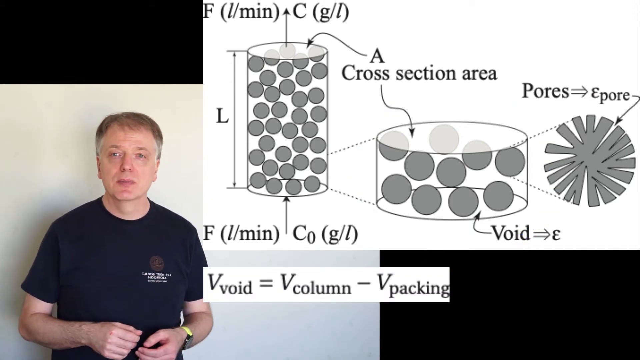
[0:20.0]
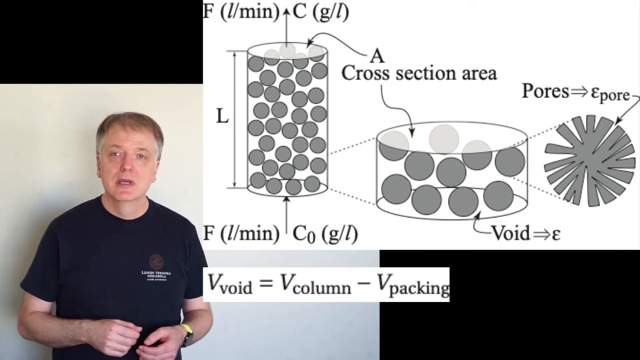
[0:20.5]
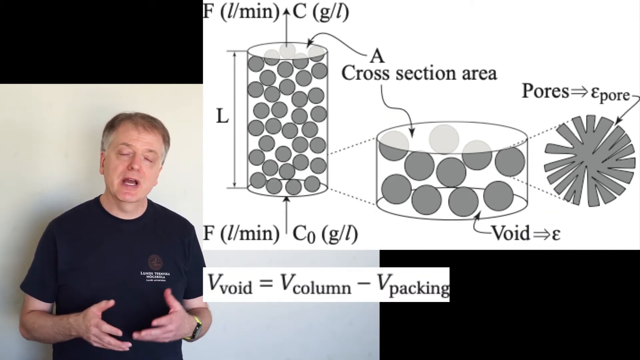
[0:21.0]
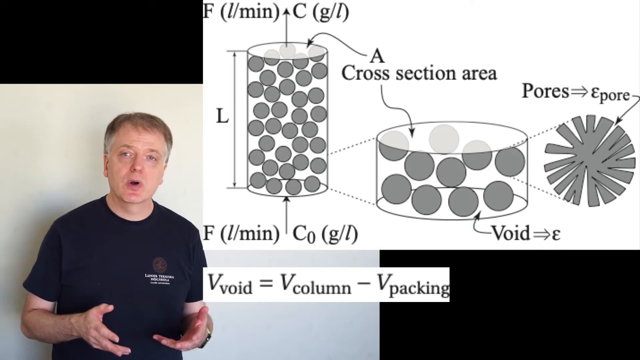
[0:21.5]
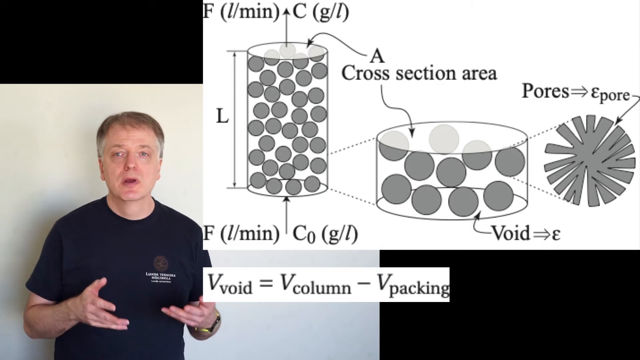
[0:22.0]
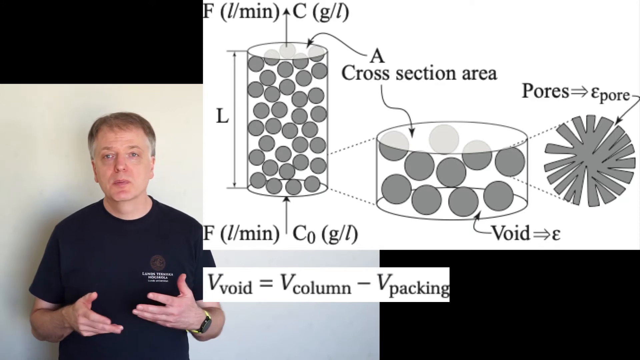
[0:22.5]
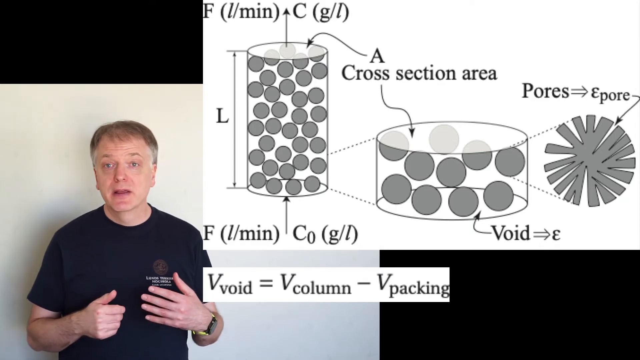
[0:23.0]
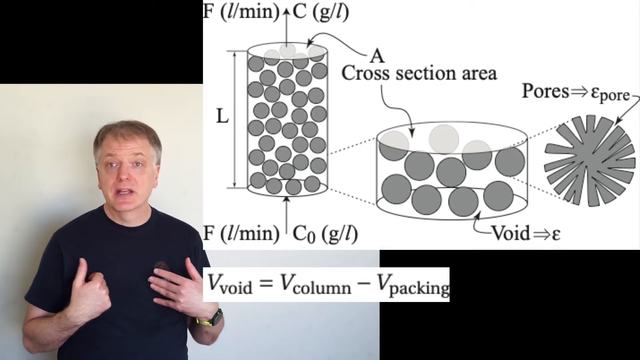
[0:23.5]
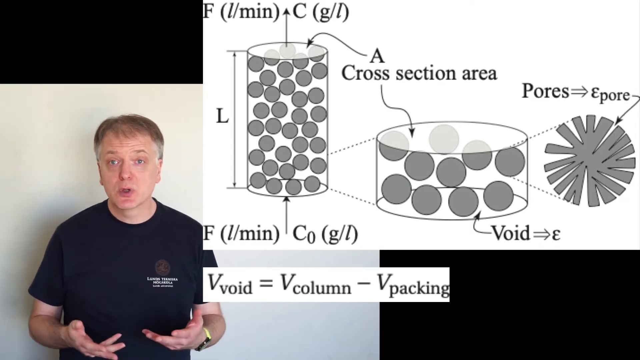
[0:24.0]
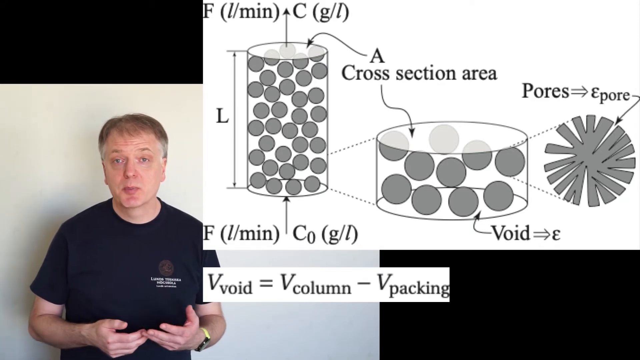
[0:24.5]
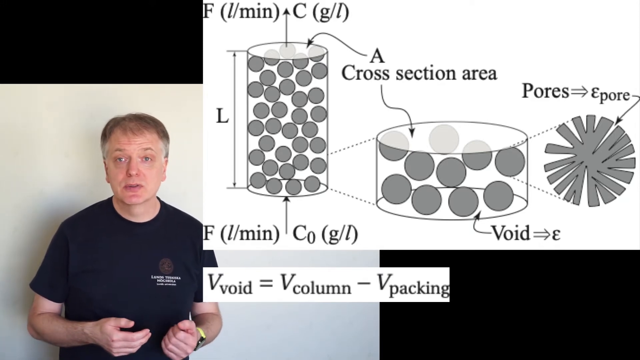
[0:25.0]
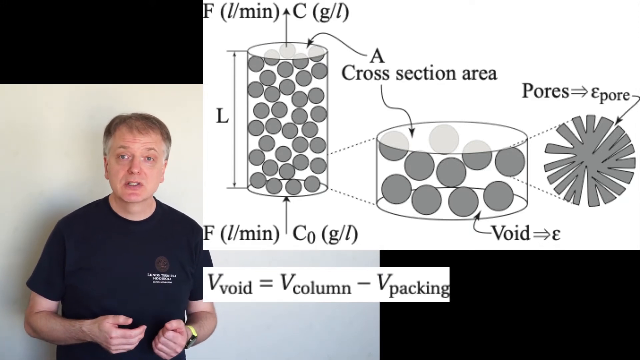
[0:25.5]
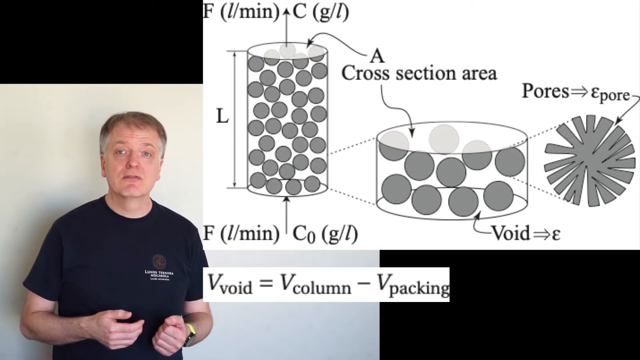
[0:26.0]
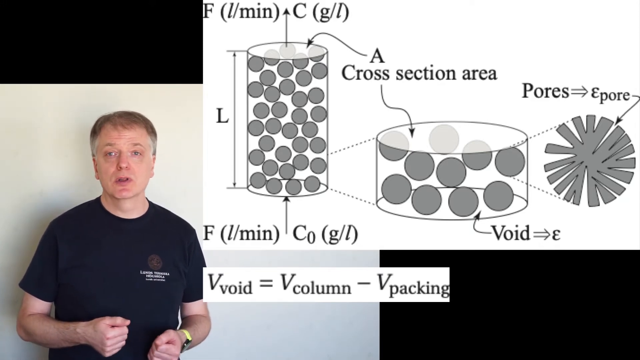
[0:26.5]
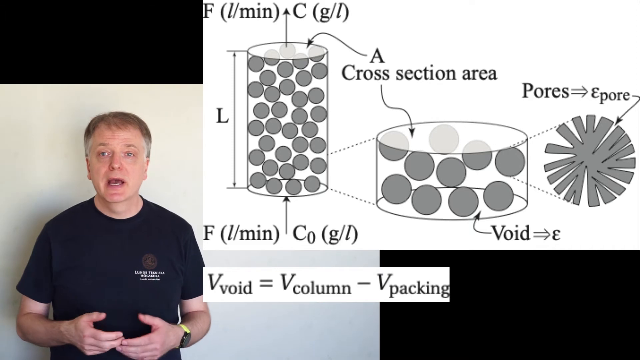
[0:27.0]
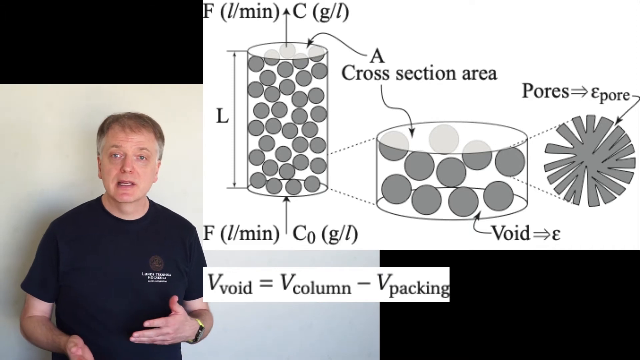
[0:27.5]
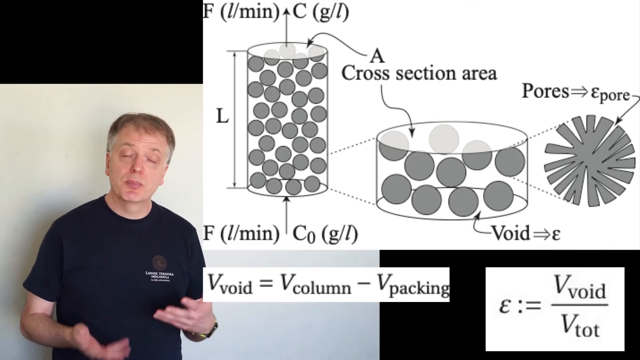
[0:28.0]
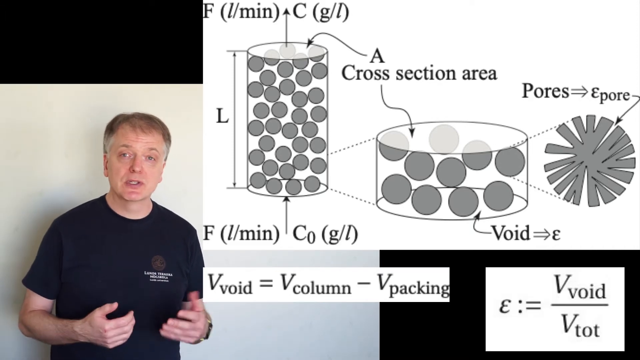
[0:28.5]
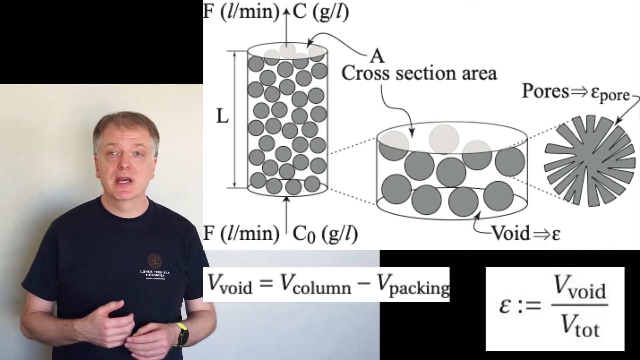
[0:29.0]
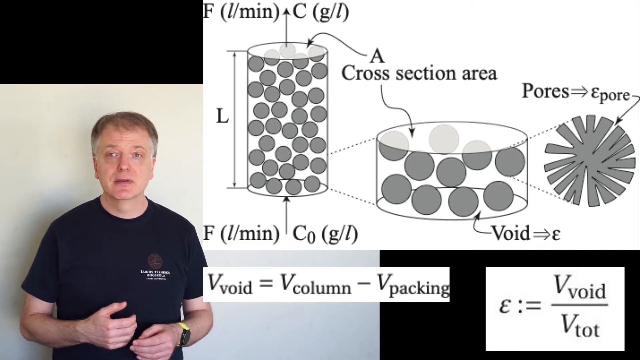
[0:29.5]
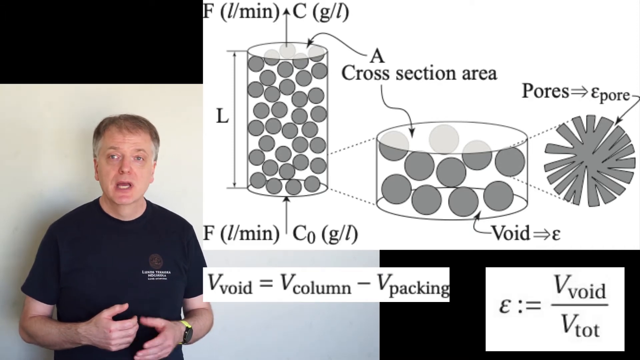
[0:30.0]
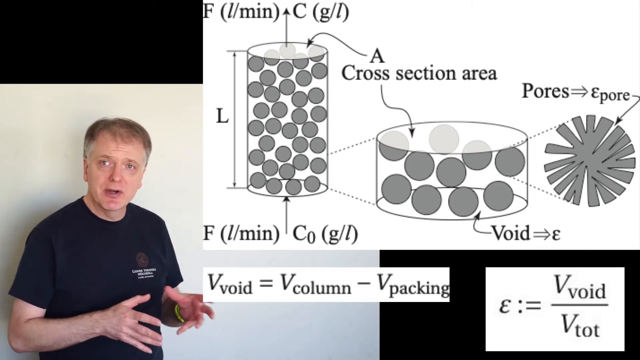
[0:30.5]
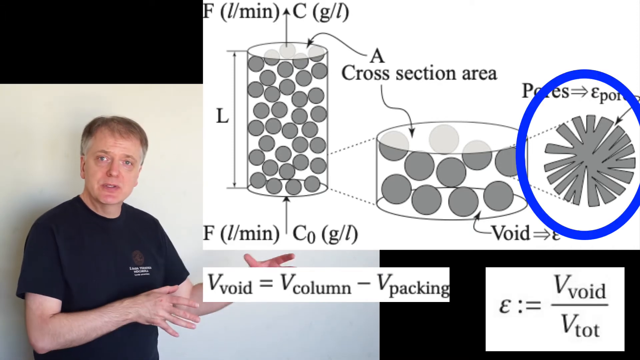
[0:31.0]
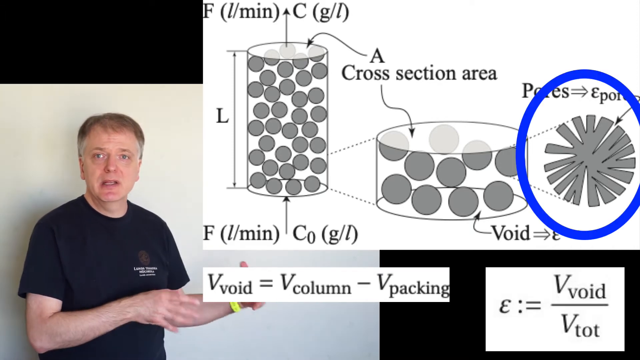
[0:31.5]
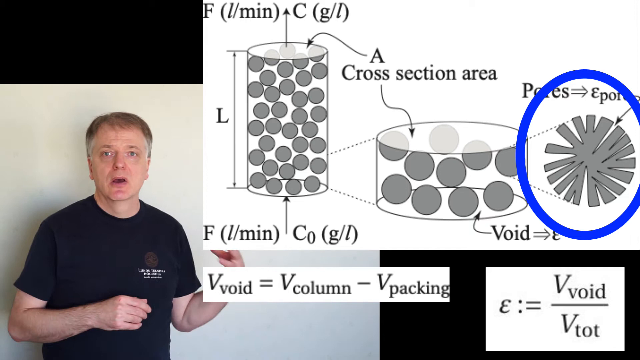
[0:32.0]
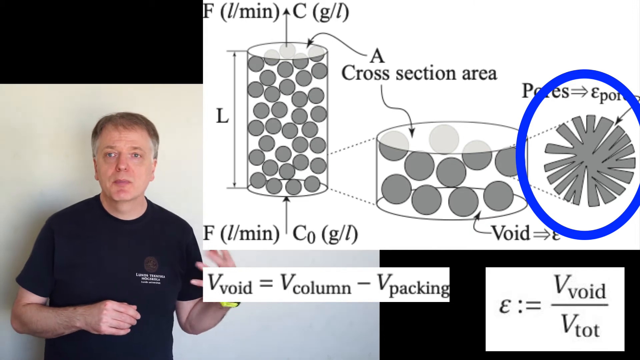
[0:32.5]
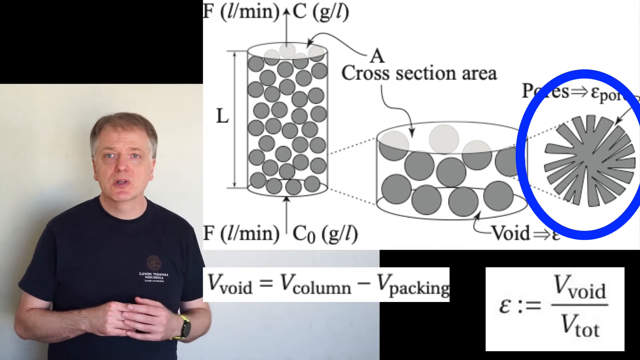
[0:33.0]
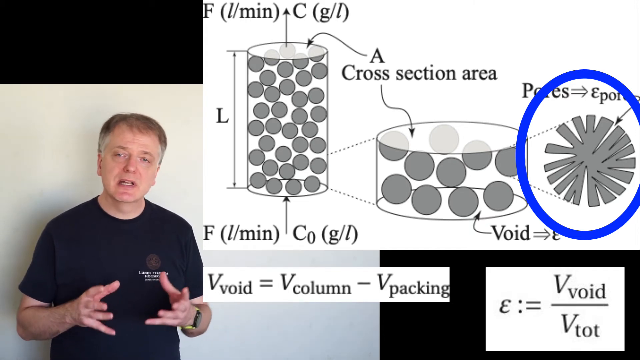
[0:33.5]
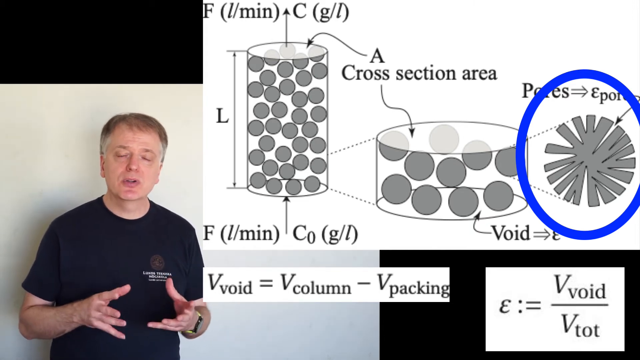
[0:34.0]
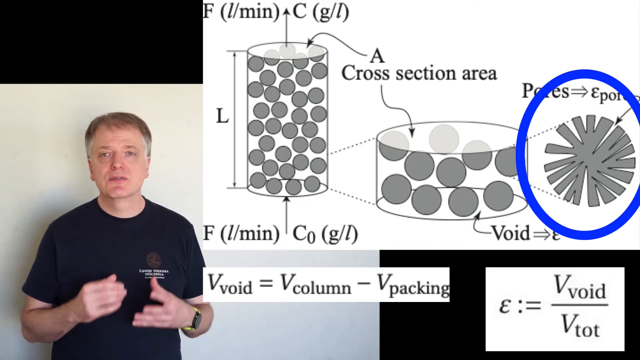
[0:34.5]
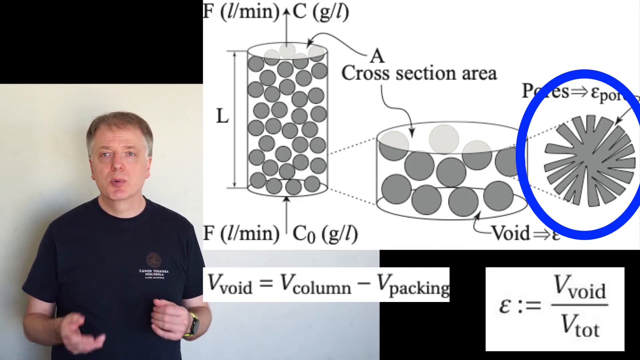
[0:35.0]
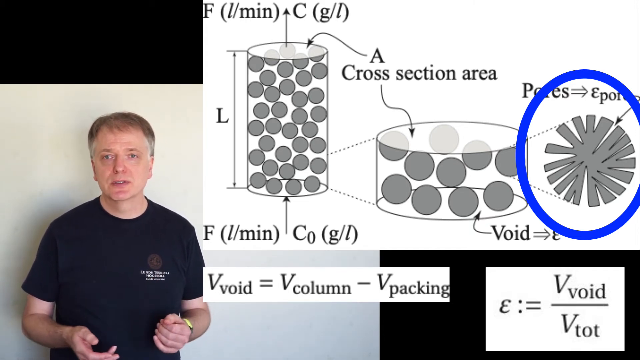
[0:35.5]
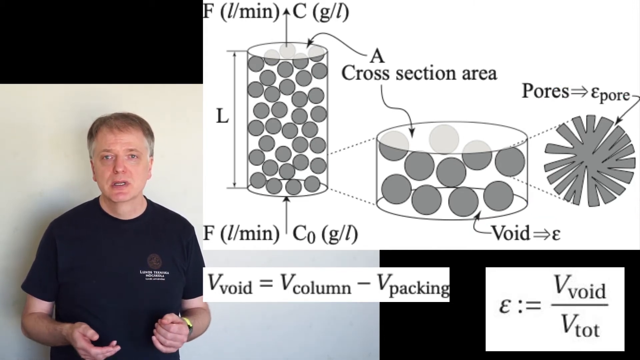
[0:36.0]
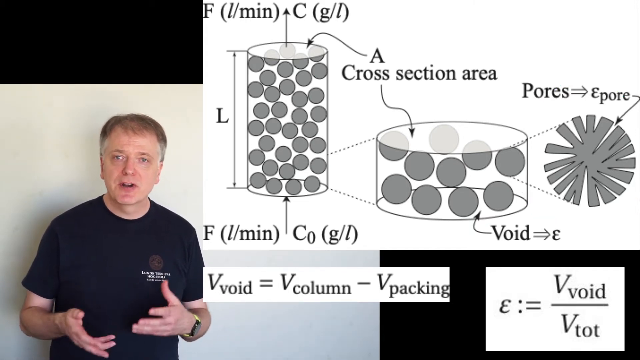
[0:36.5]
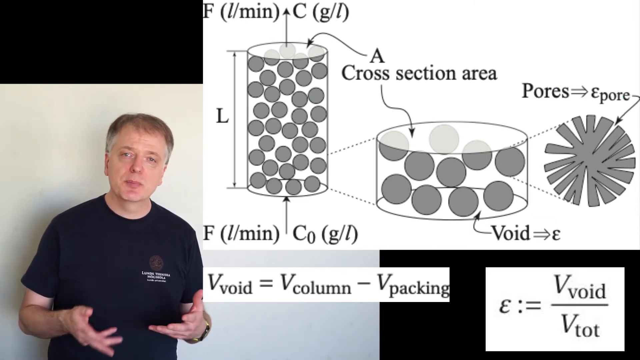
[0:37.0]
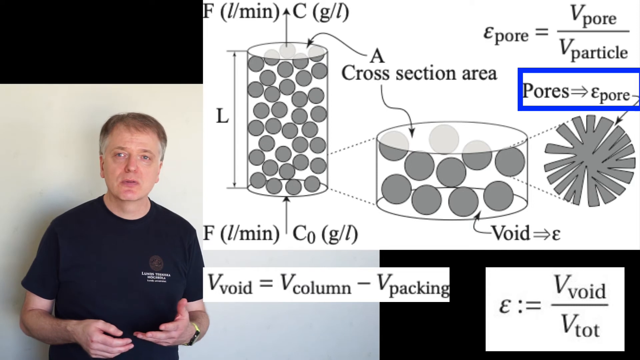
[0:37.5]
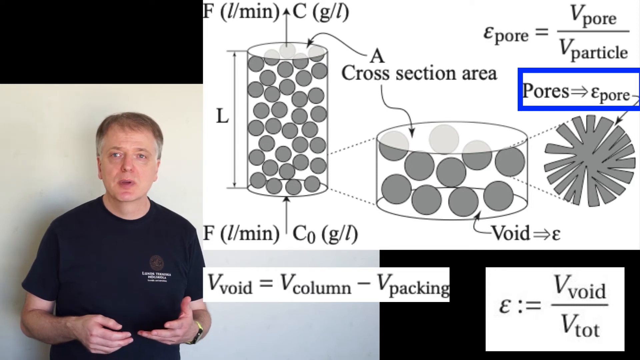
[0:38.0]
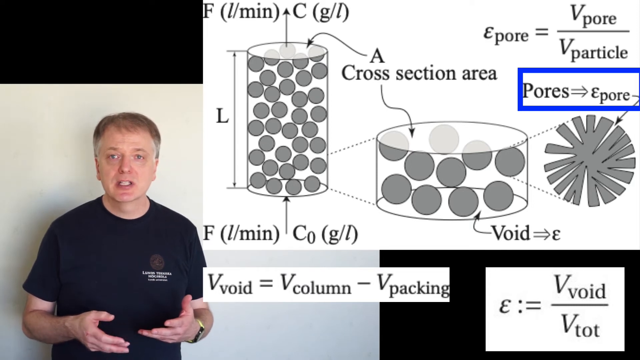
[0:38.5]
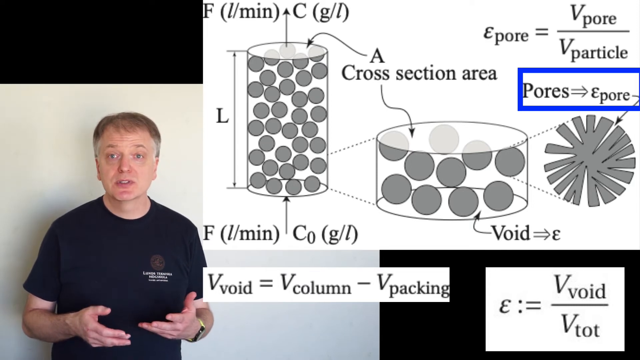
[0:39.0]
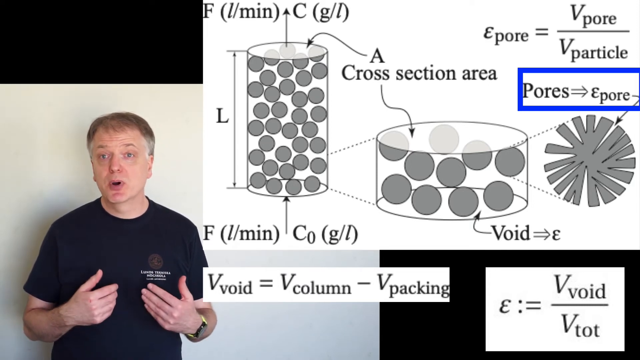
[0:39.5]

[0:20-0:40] A Caucasian man in a black t-shirt is in the lower left-hand corner. He has darkish brown hair on top and kind of gray and white hair on both sides of his head. The video shows something like chemistry, with something like a void, a column and a packing. As he talks, text at the bottom reads "E colon equals V void over V total". He circles a pore, and above it the text reads "E pore equals V pore over V particle". A royal blue box then appears around the word "pores". The man stands against a white wall, with a little bit of shadow behind him near his shoulder.